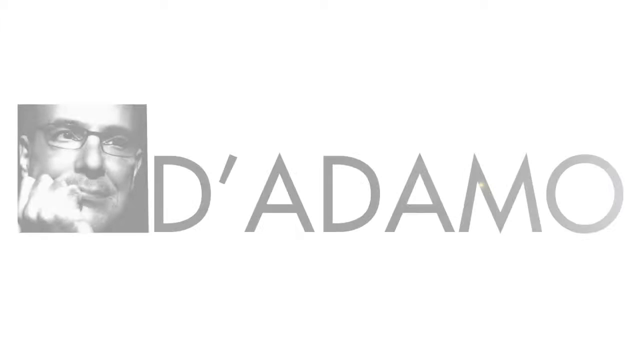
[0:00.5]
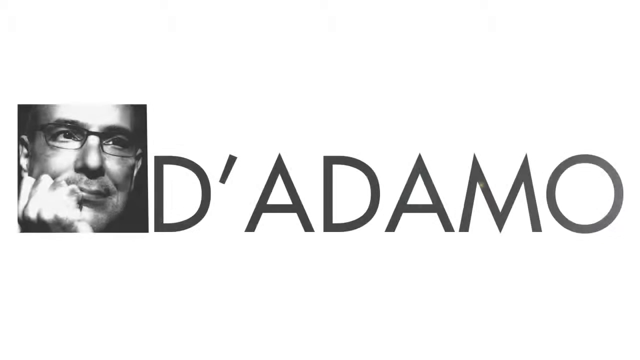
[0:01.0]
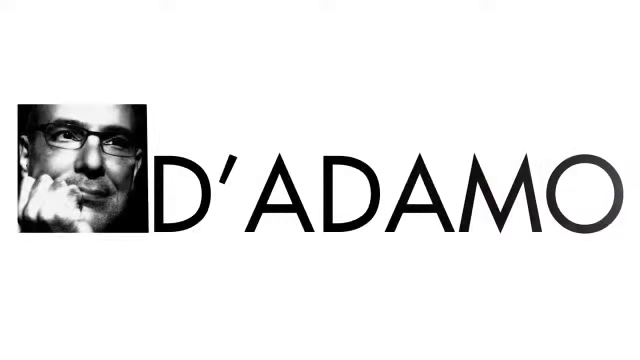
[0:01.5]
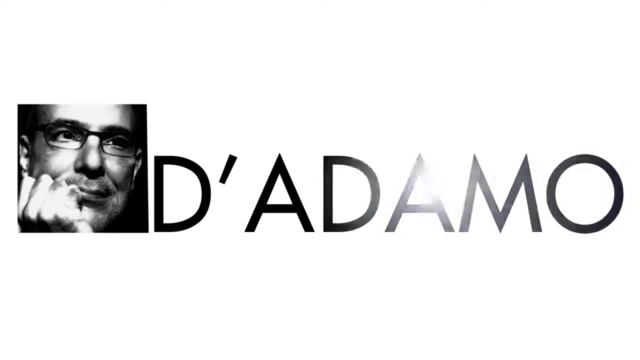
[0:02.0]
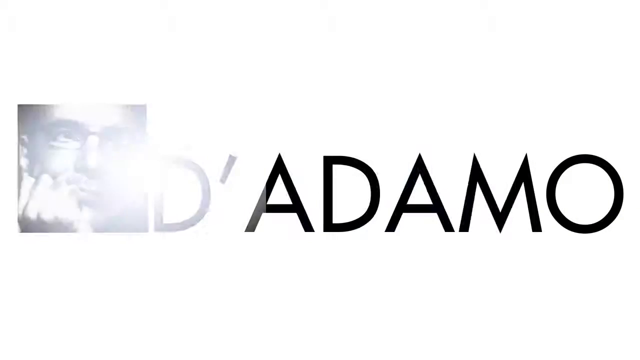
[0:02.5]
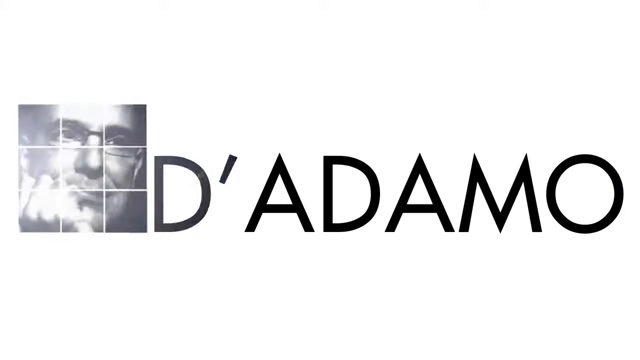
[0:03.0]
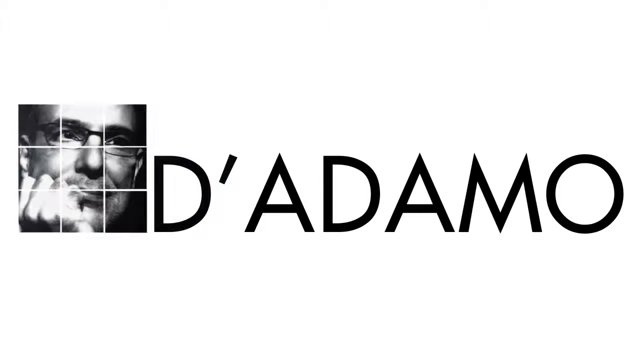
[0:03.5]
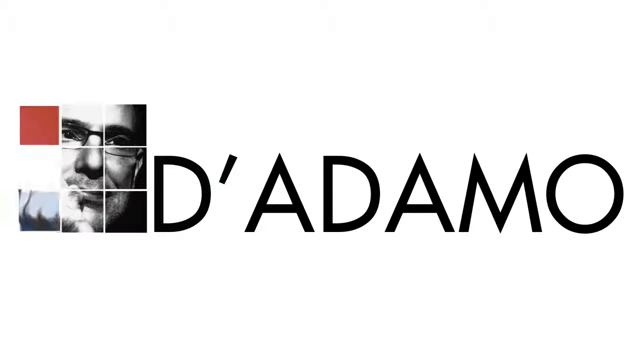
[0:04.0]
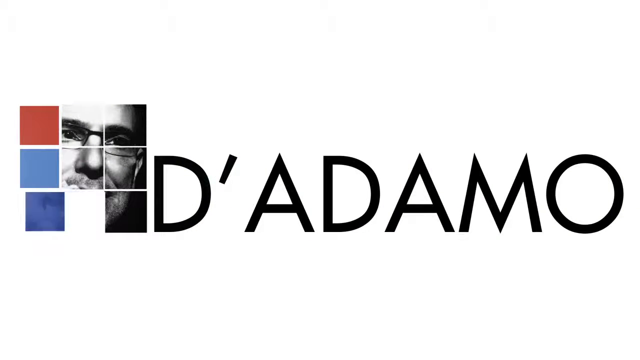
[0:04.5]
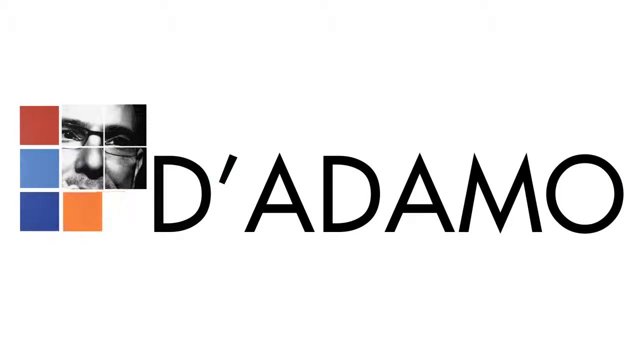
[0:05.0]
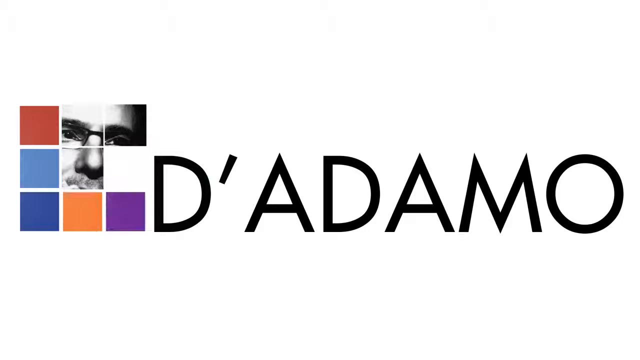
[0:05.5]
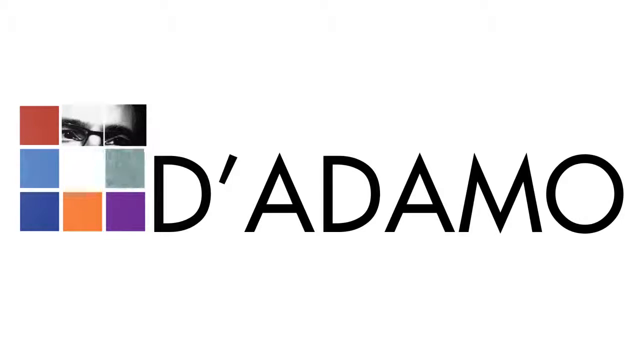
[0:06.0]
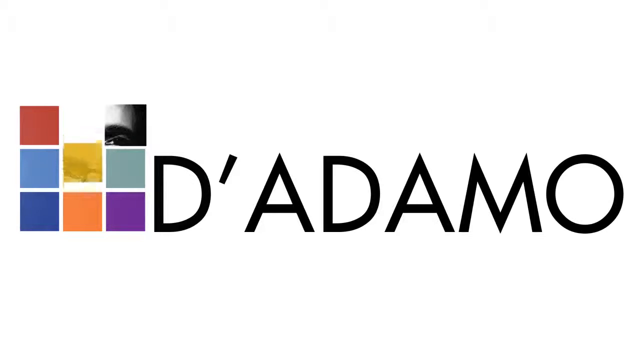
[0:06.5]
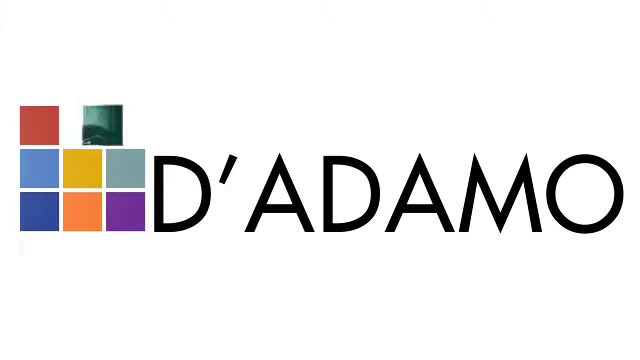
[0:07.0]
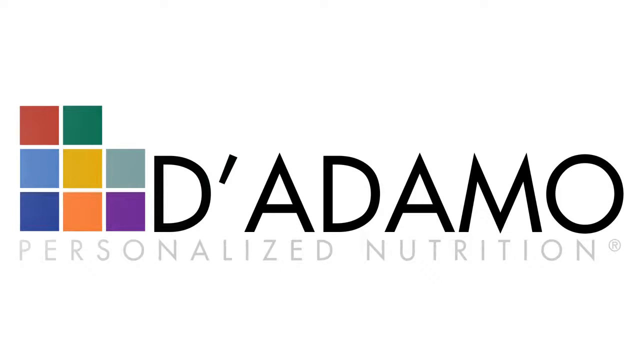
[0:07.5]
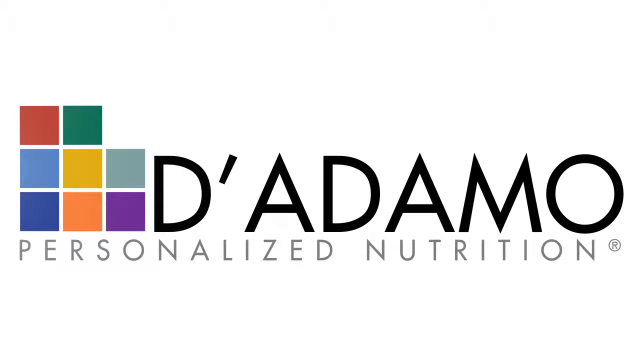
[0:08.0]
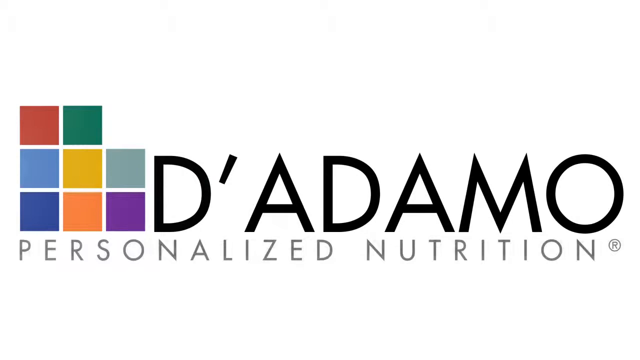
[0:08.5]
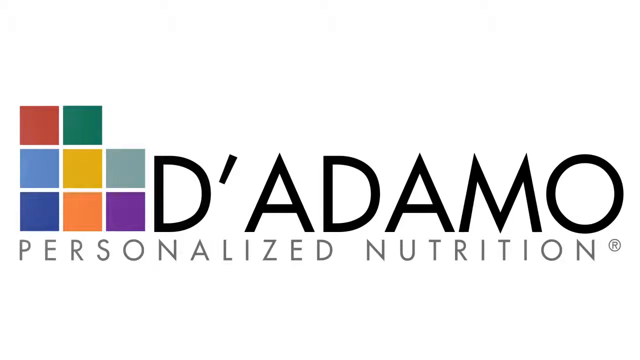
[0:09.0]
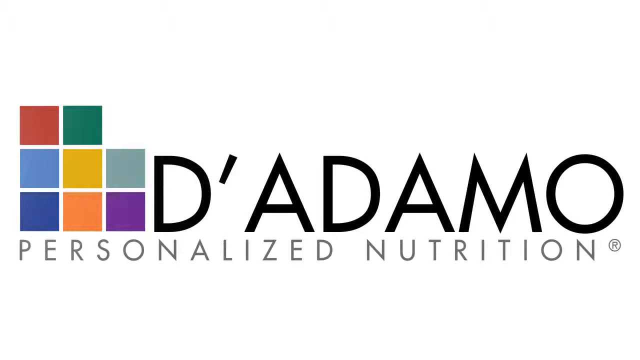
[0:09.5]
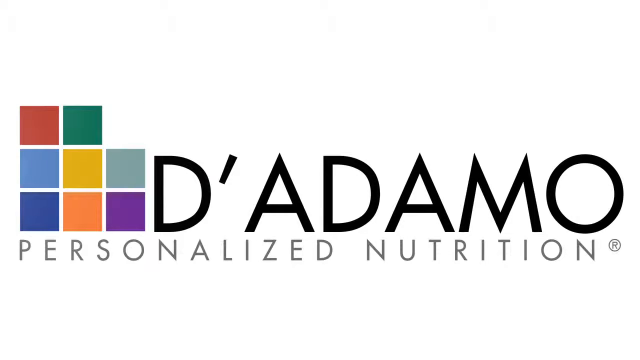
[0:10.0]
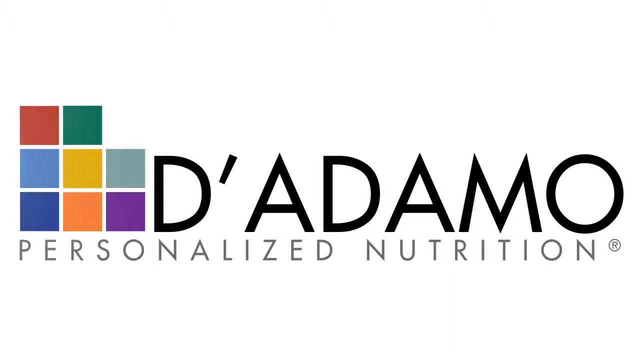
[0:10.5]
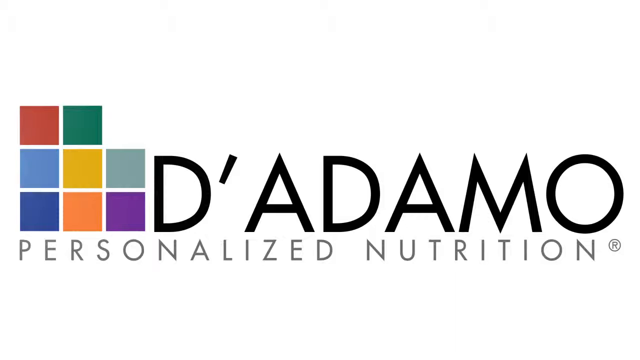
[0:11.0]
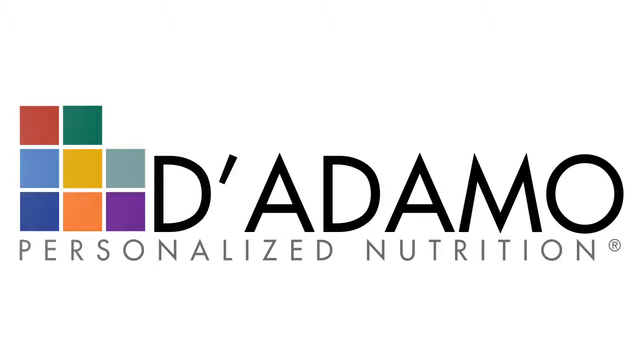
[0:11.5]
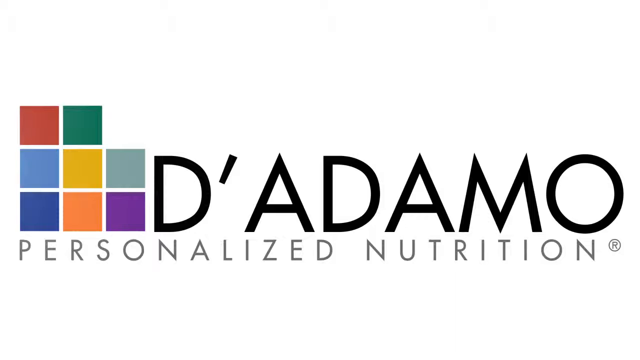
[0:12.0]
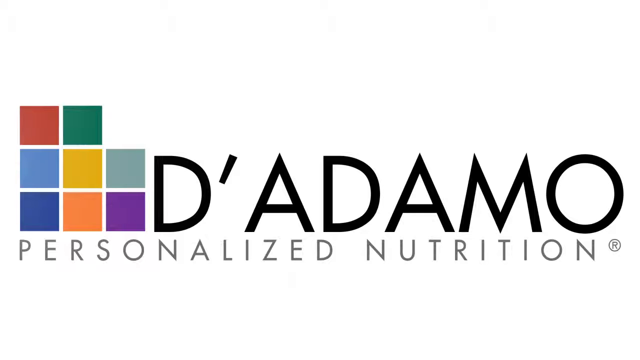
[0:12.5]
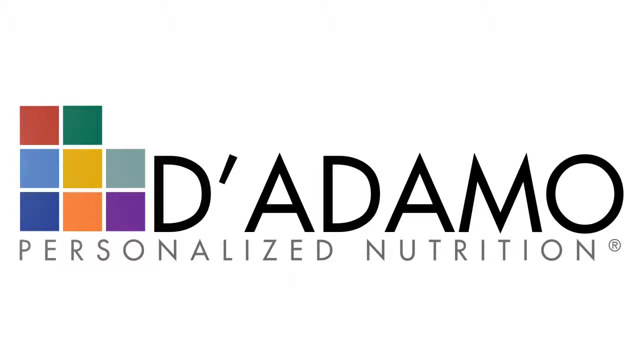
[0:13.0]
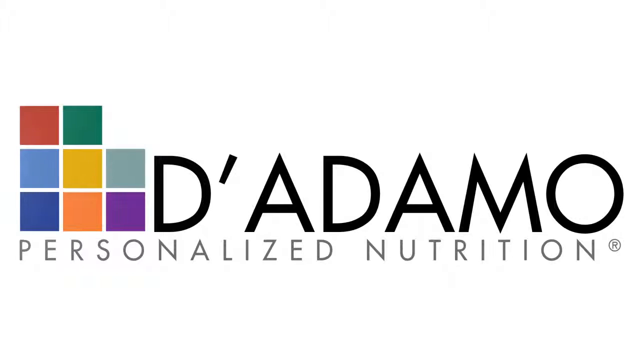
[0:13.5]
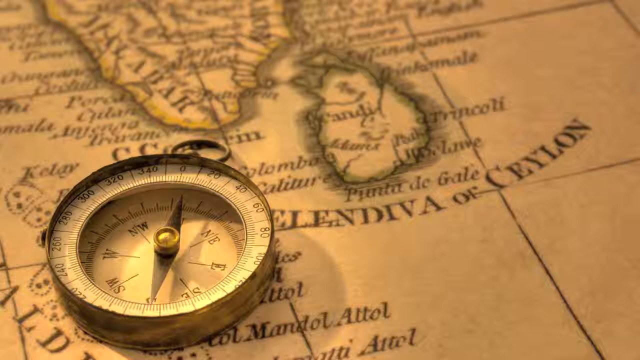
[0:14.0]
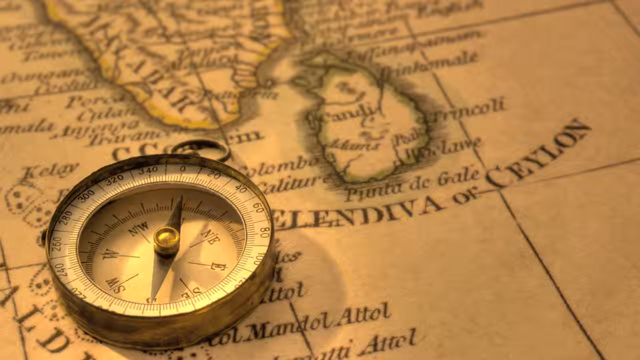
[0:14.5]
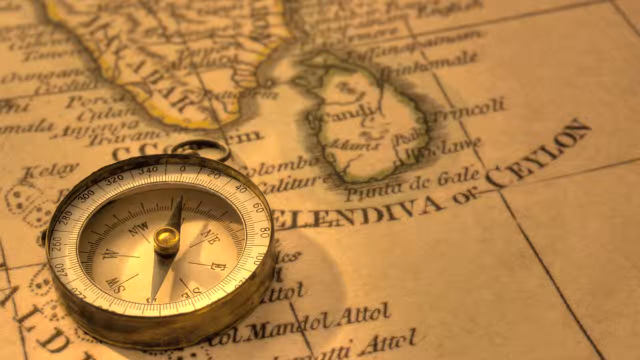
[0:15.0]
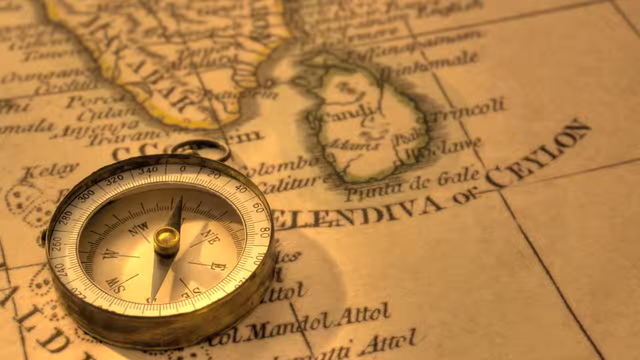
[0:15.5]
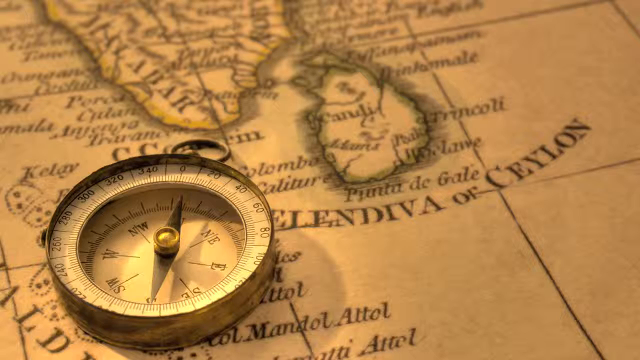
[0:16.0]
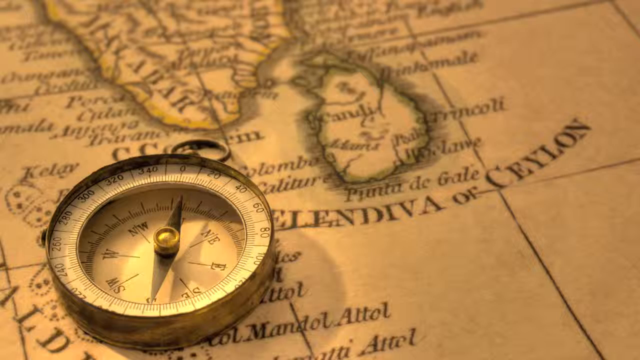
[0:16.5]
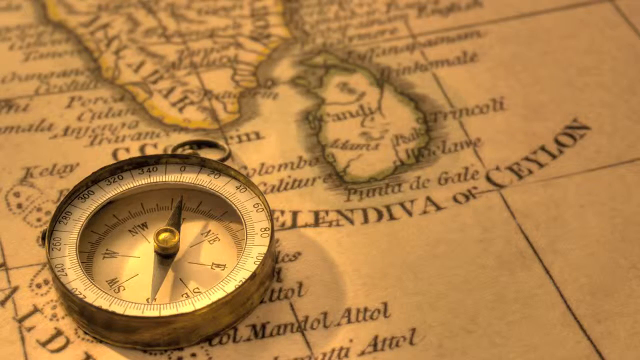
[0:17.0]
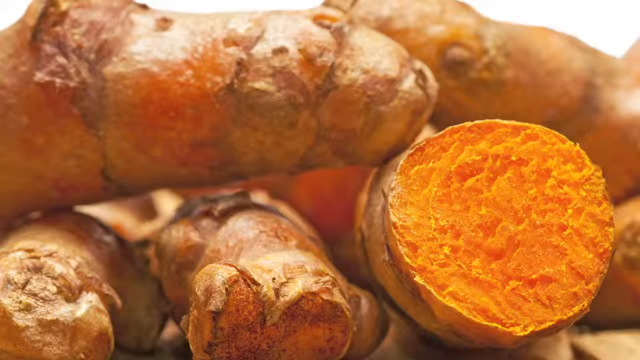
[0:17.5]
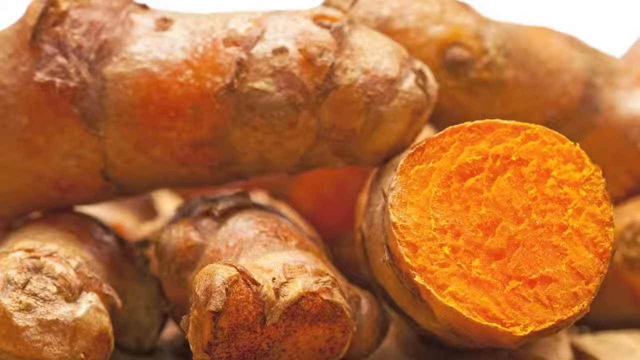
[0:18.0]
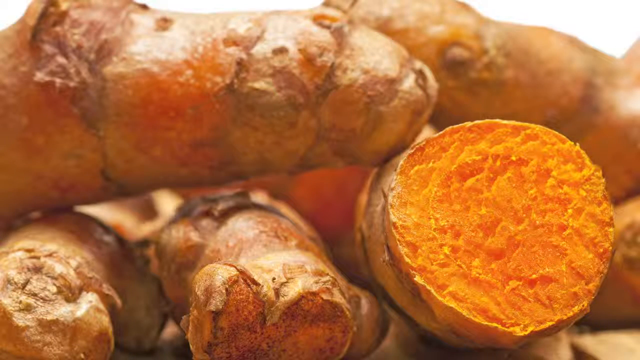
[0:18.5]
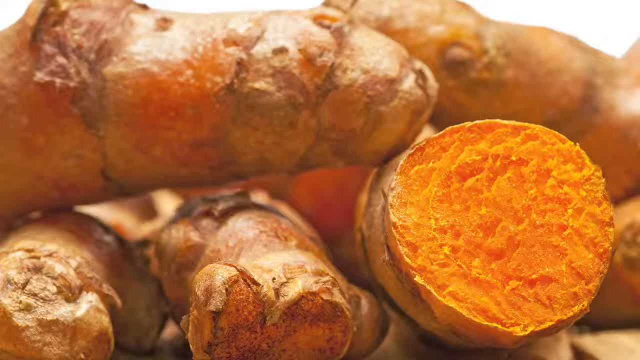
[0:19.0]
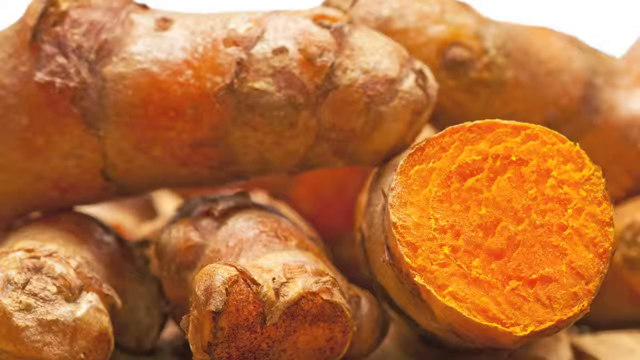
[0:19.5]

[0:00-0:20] The video opens with the name Di Adamo in black text on a white background. On the left is a black-and-white photograph of a man wearing glasses, gazing off to the left, leaning his chin on his right palm with his fingers curled inward into a fist. The photograph then changes into a series of small colored squares, such as red, blue and orange, which fill in starting from the top left corner, going down, then right, then up to the right corner and left, until they complete a square of small colored blocks. Next comes a close-up of an old-fashioned map showing the island of Ceylon, with an old-fashioned manual-style compass on the left. This is followed by a close-up of some cooked yams; on the right, one yam is cut in half, revealing its bright orange flesh in the center.